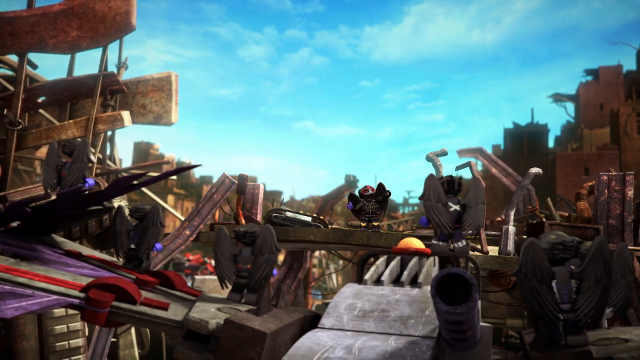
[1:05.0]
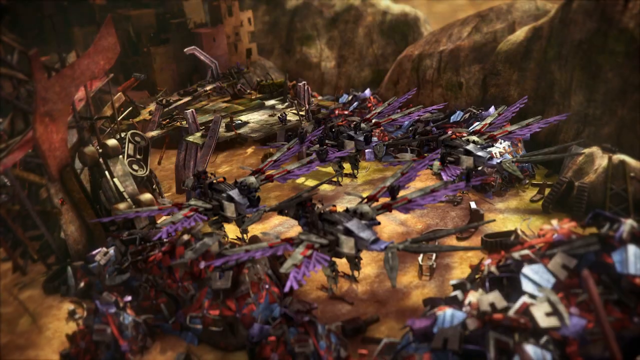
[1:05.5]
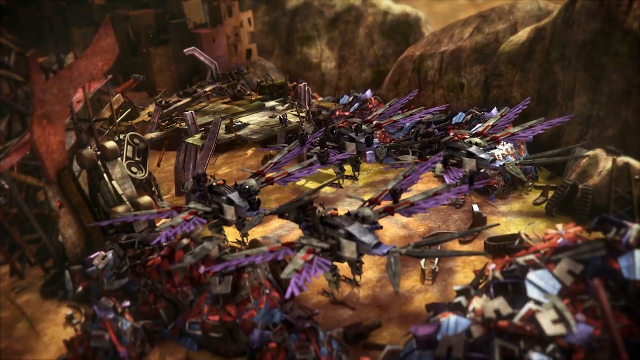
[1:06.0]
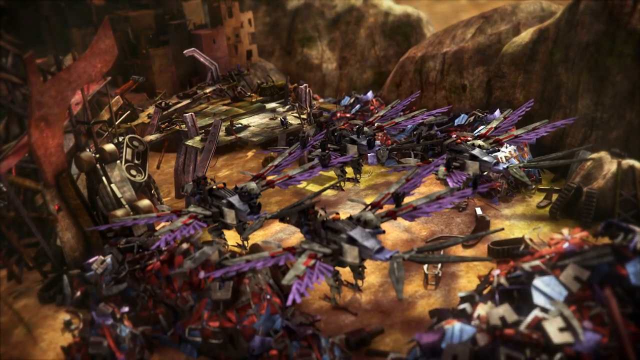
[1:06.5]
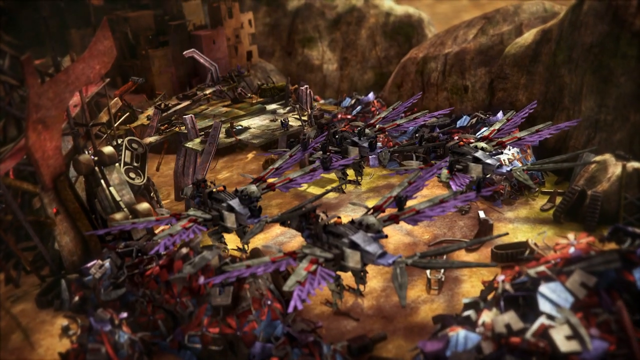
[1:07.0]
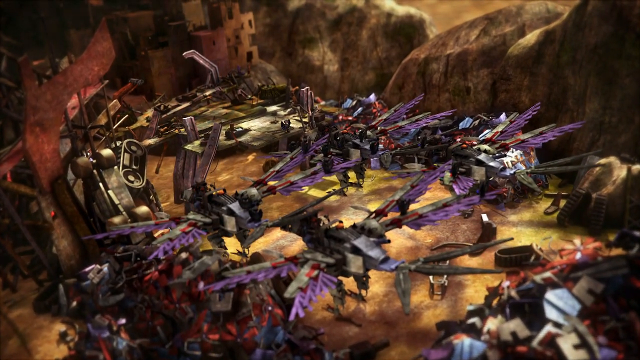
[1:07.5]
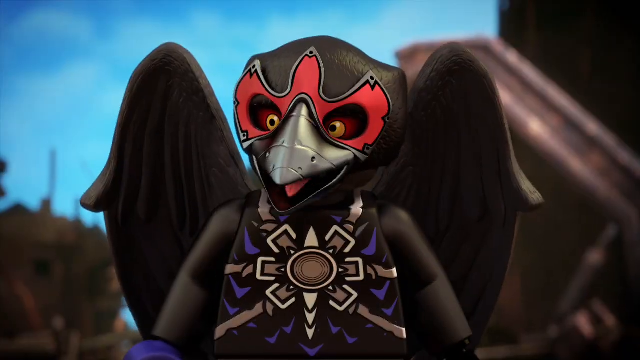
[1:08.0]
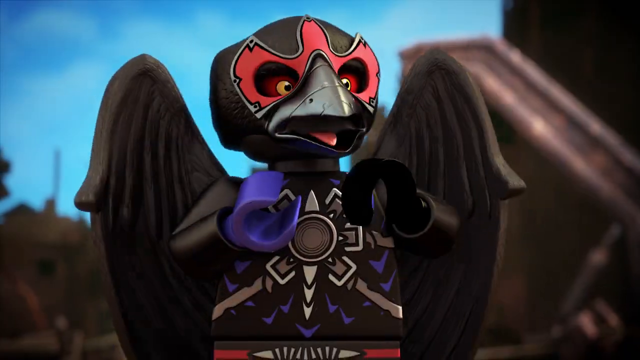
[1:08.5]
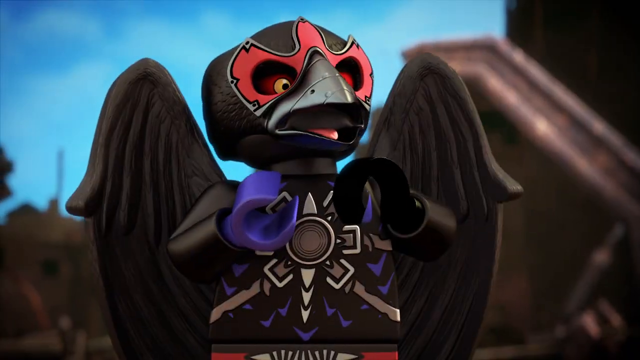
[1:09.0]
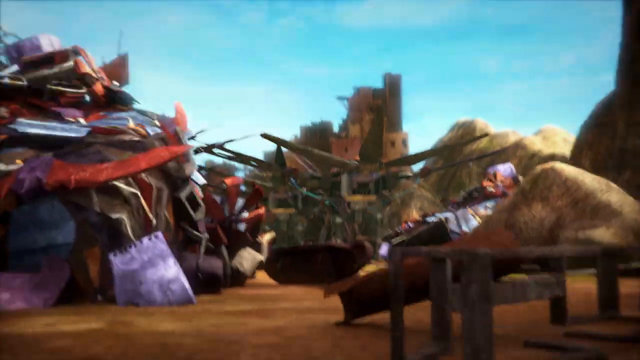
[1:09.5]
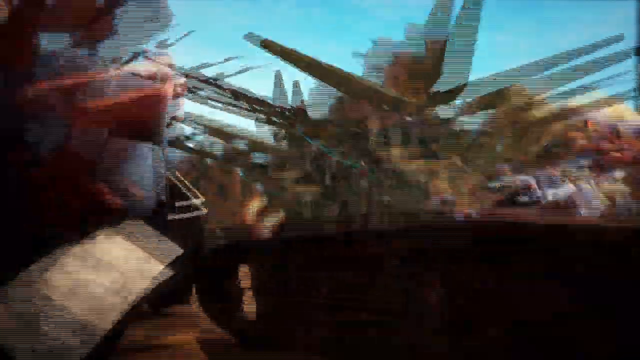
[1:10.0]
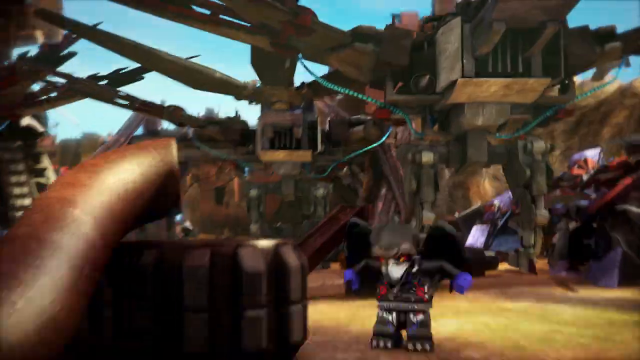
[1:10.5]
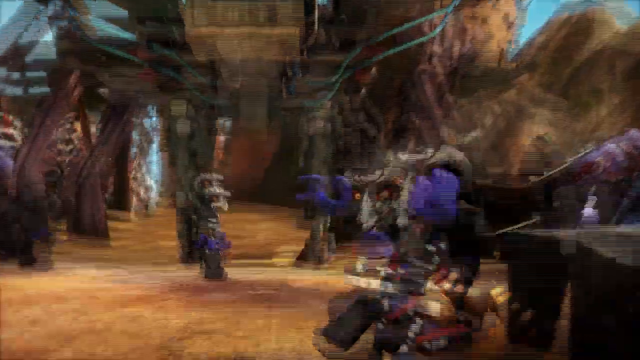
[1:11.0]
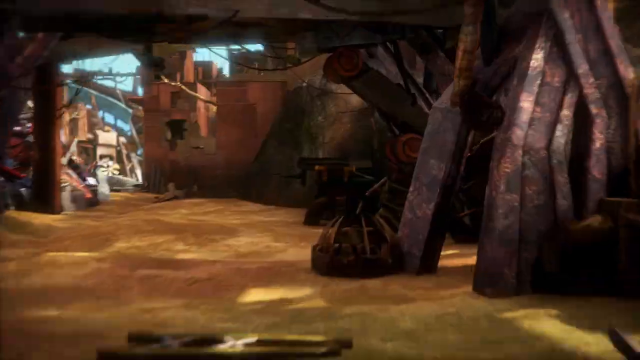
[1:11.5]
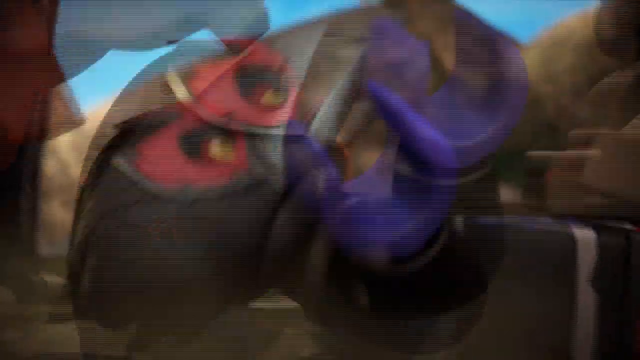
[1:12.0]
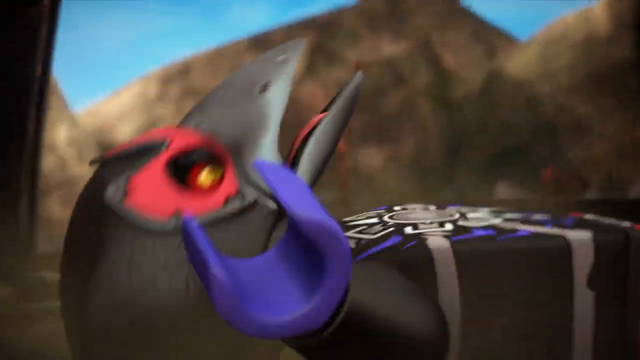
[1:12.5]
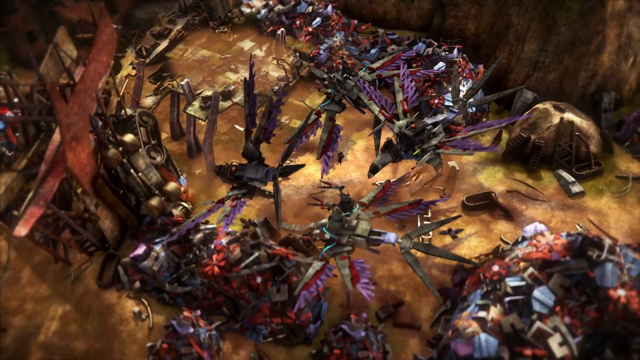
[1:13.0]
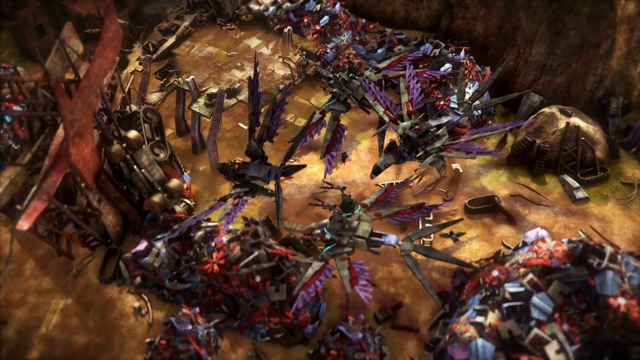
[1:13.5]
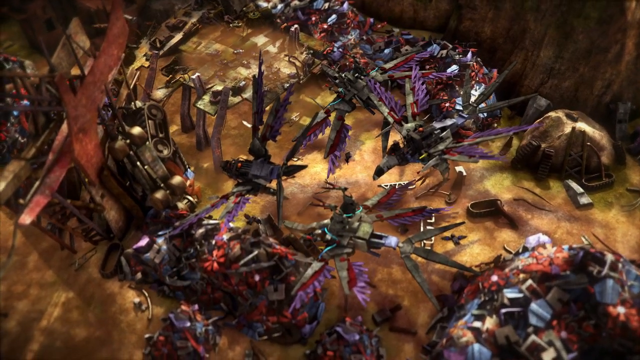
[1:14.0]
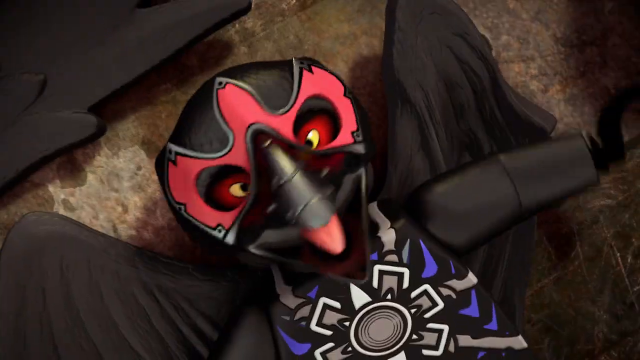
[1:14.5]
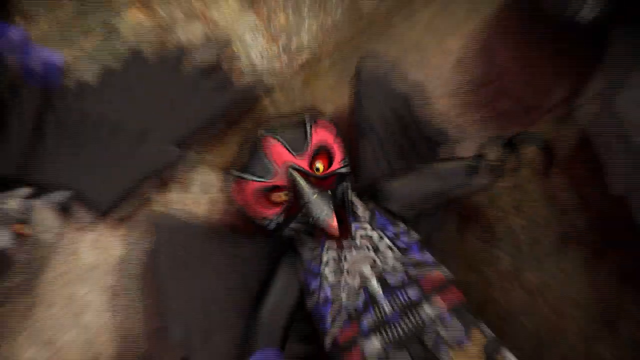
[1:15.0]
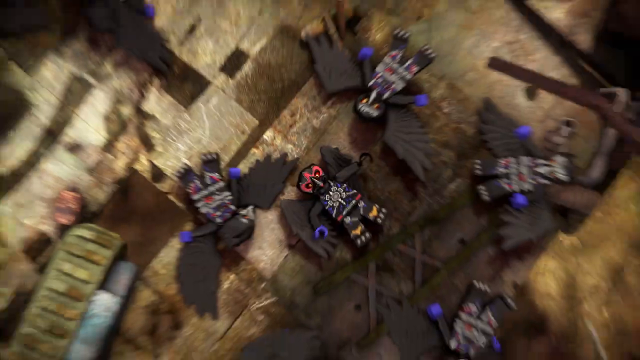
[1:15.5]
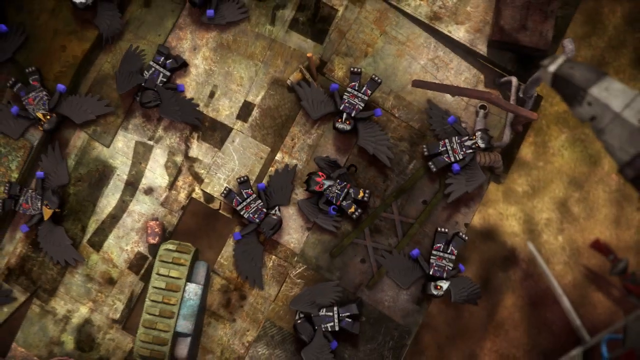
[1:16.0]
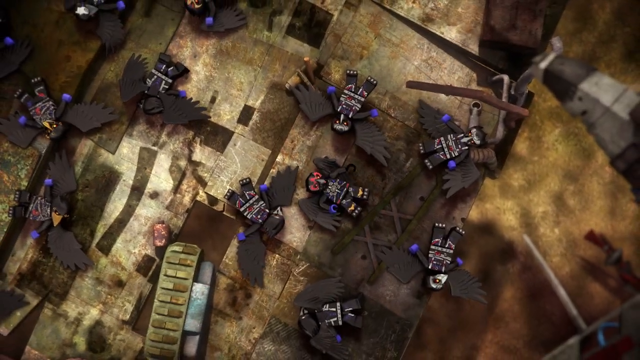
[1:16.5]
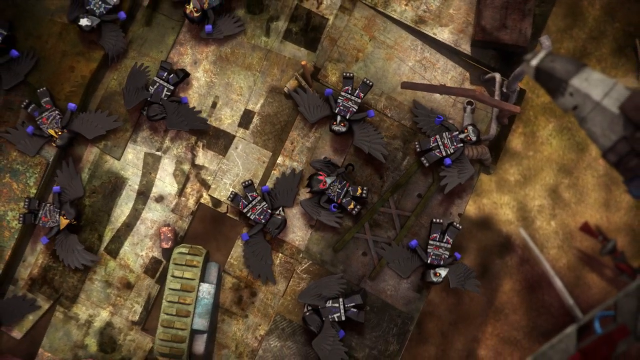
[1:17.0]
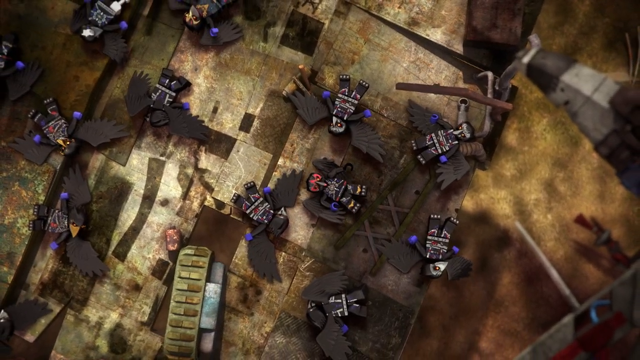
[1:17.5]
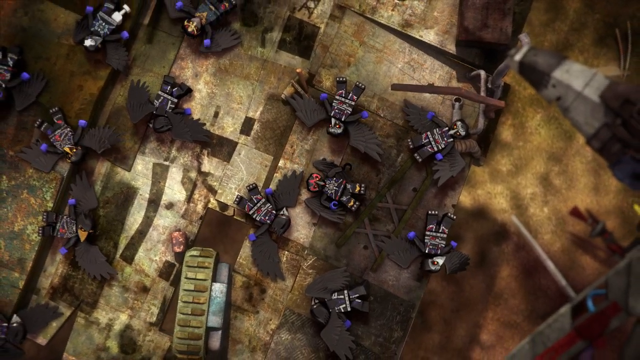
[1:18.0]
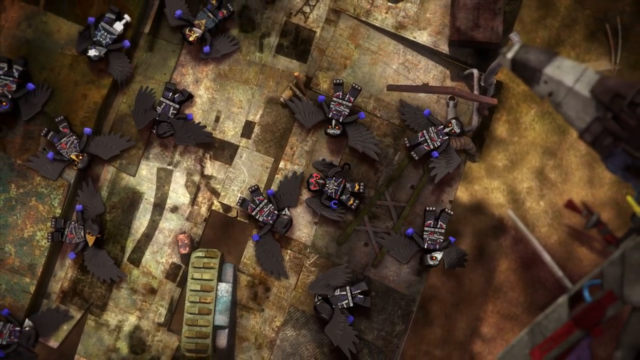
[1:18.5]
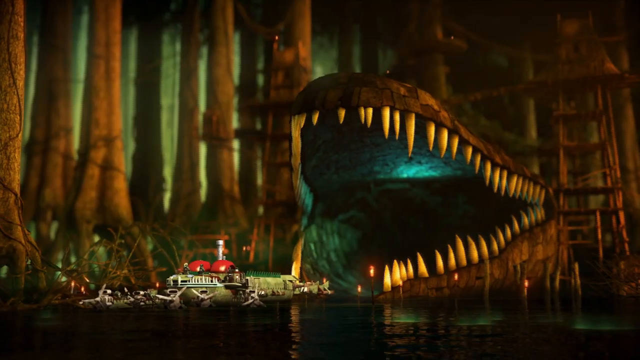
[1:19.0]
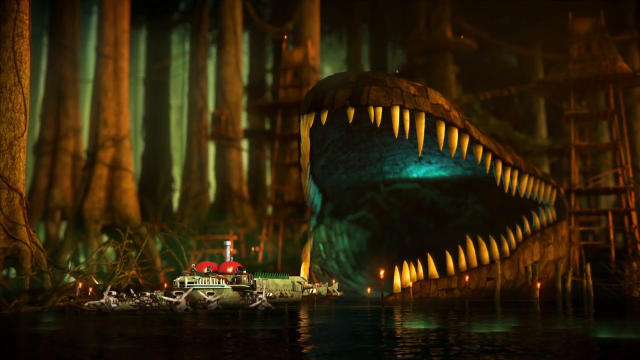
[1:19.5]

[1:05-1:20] The camera pans around what looks like a vulture's lair, with vultures and four bird-shaped flying machines. The vultures are black, with a red mask-like shape around their red and yellow eyes, very spiky motifs around their faces, sharp silver beaks and purple hands. They wear black outfits with silver decorative features and appear villainous, looking quite menacing. The vultures are lying down on the ground, some with their wings splayed out behind them, while the camera vibrates a lot, as if there were possibly an earthquake. Their leader shakes its head while lying flat on the ground, with its subordinates lying in a circle around him; it looks like they have been under attack and some damage has occurred. The shot ends with a pan to a different landscape, with a large crocodile mouth in the background and a small city in front.